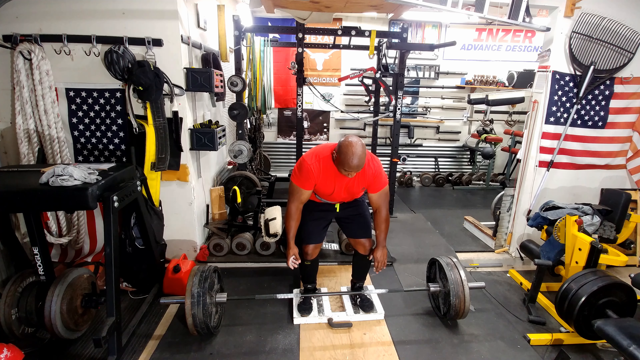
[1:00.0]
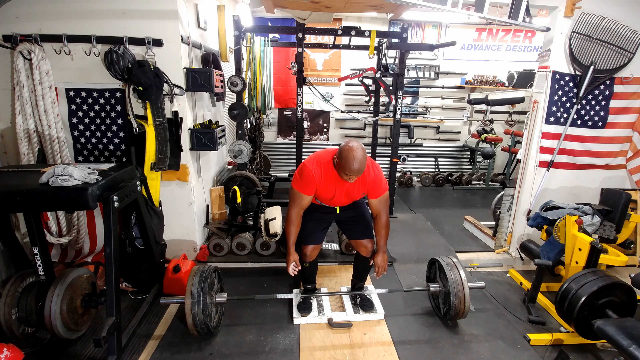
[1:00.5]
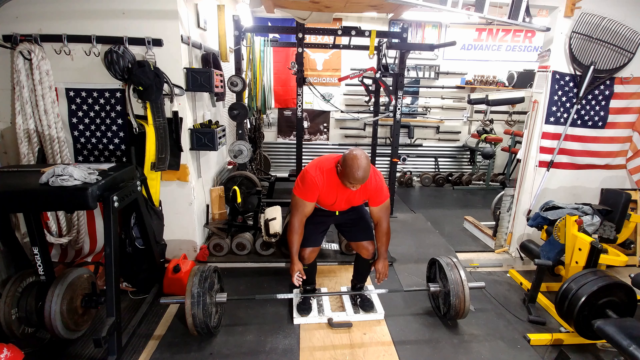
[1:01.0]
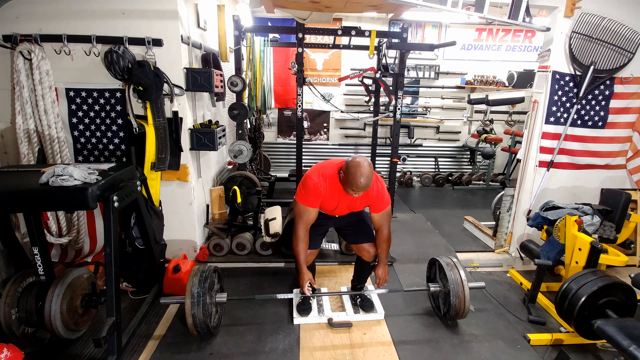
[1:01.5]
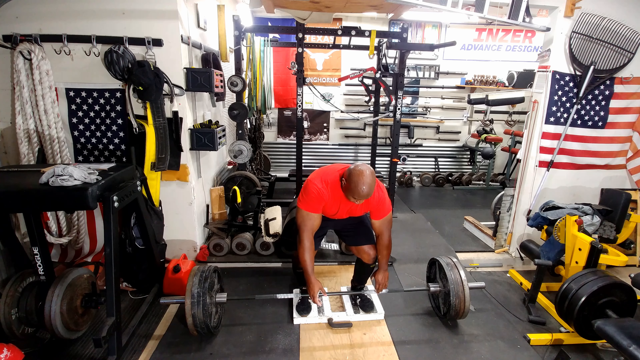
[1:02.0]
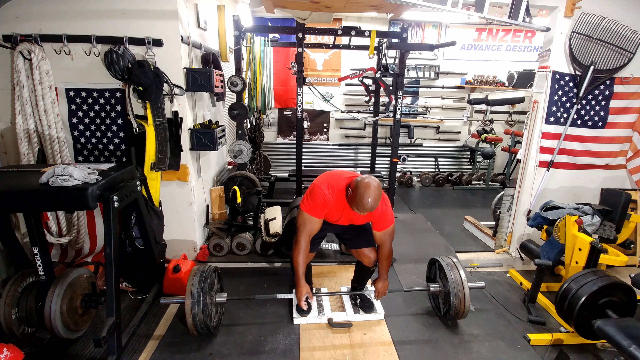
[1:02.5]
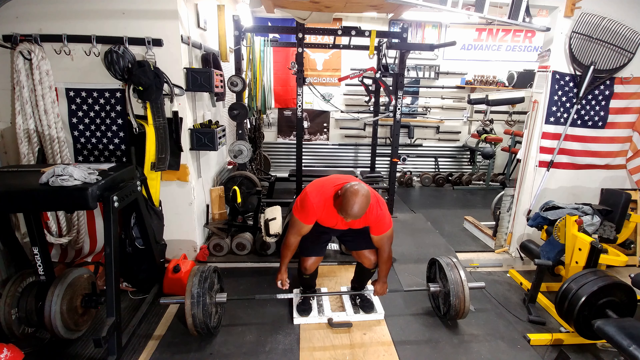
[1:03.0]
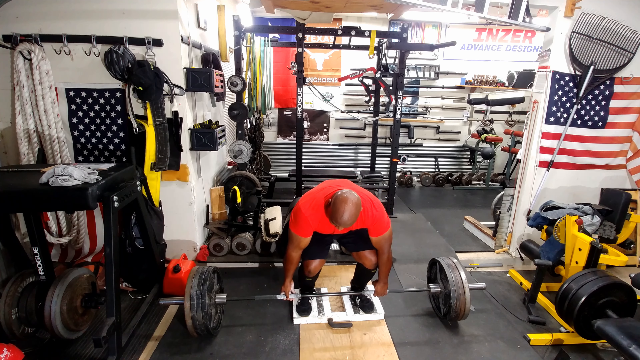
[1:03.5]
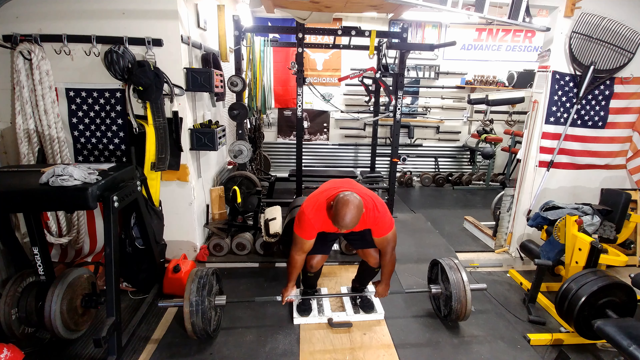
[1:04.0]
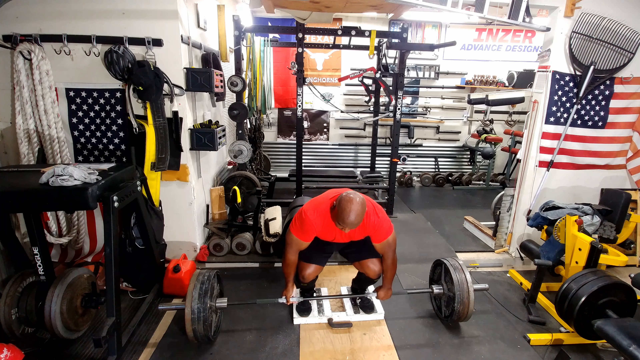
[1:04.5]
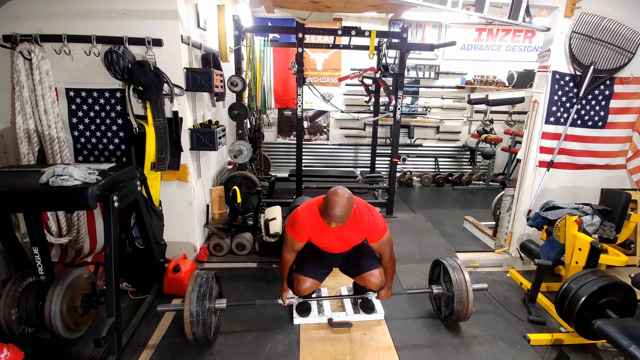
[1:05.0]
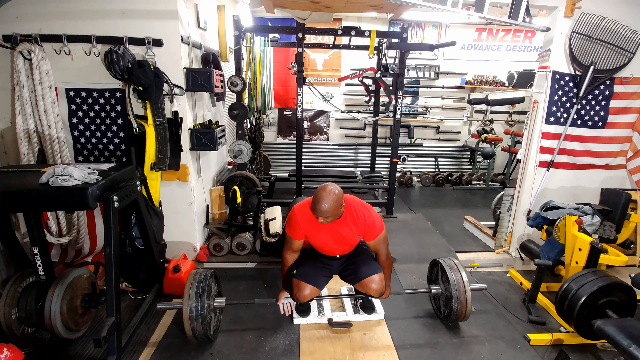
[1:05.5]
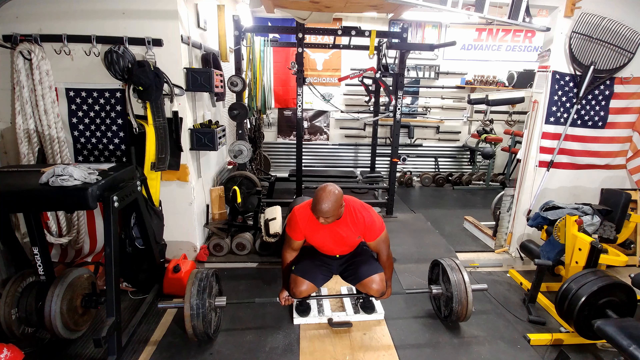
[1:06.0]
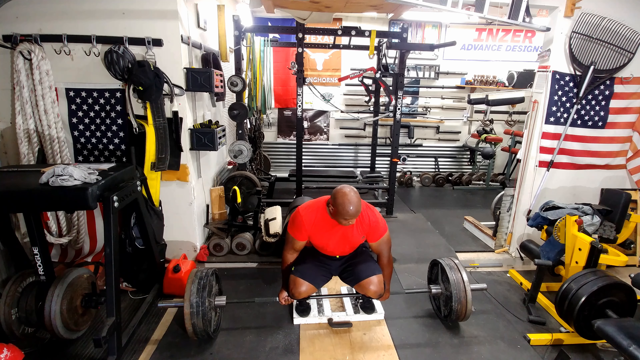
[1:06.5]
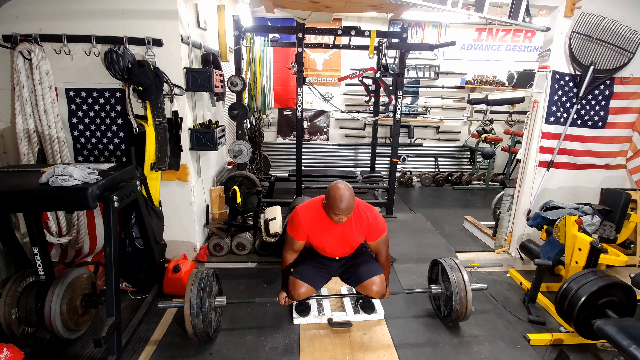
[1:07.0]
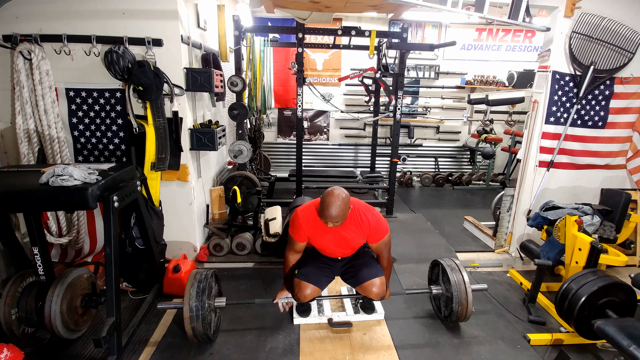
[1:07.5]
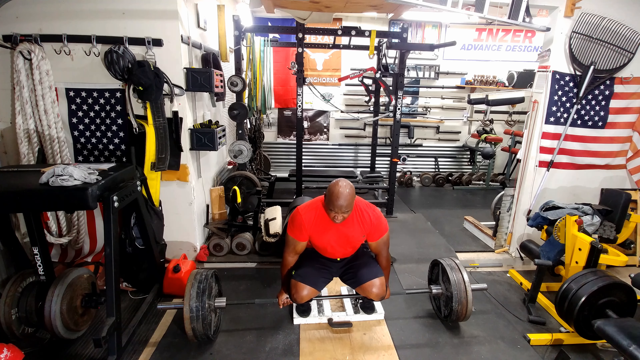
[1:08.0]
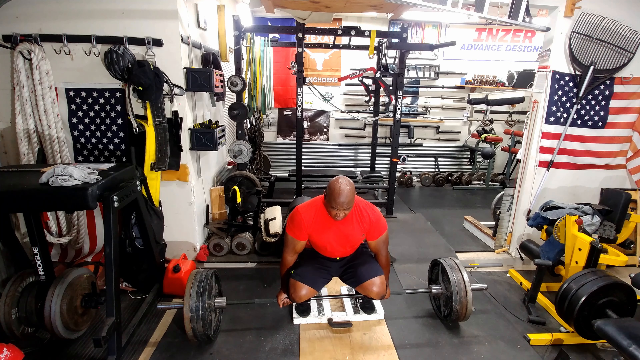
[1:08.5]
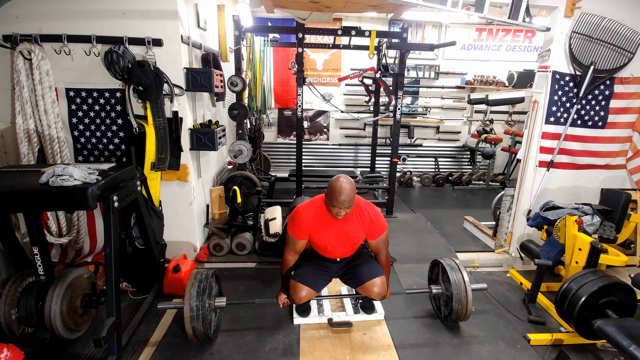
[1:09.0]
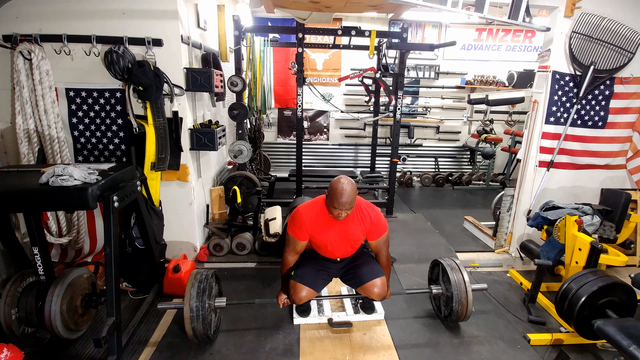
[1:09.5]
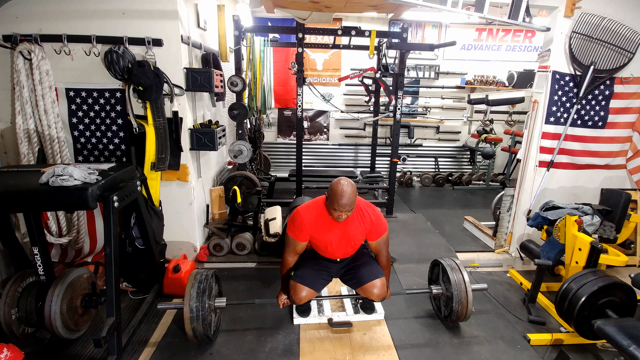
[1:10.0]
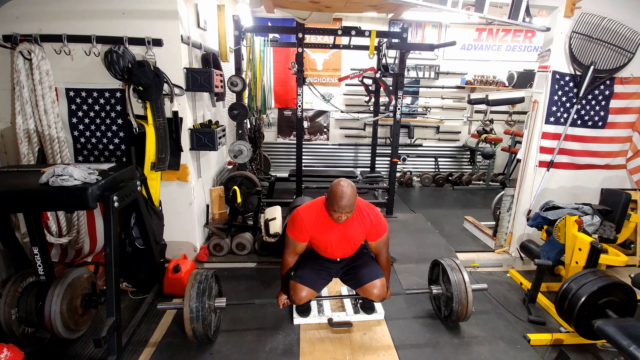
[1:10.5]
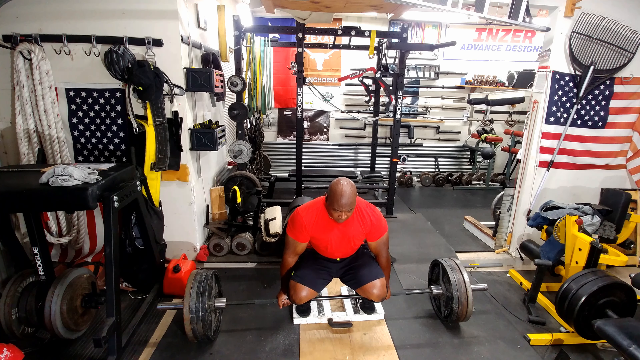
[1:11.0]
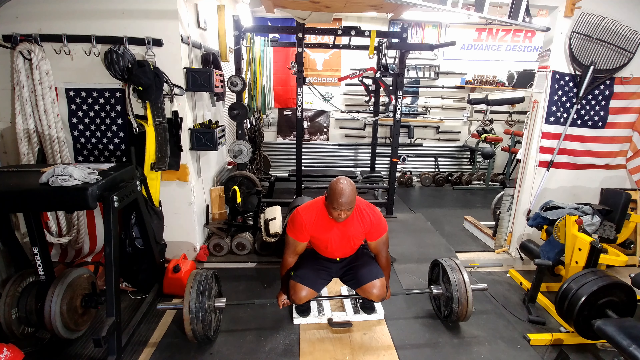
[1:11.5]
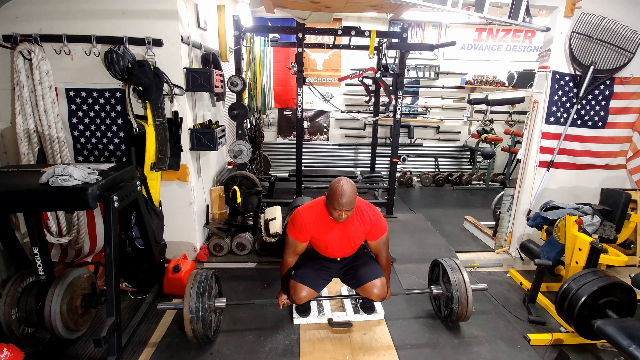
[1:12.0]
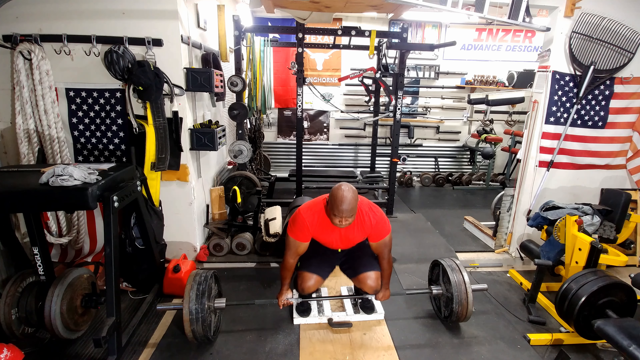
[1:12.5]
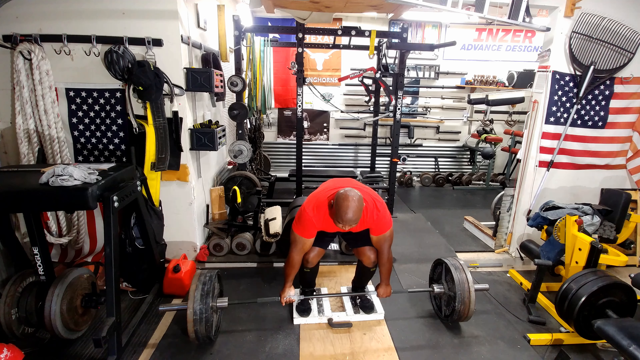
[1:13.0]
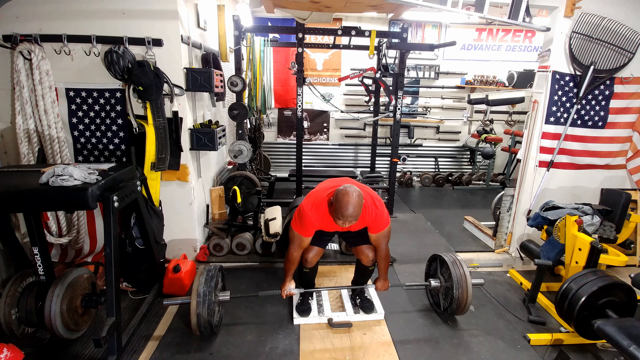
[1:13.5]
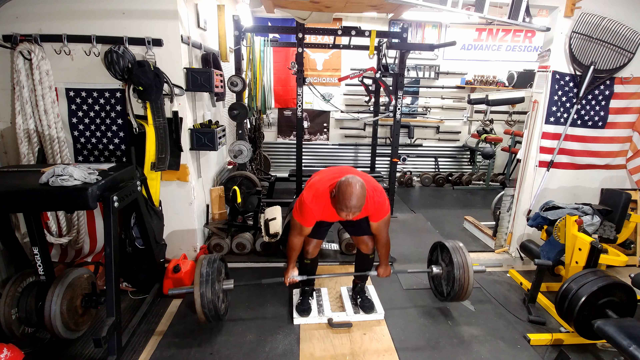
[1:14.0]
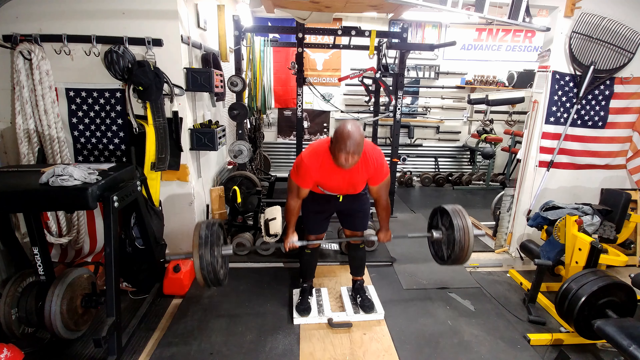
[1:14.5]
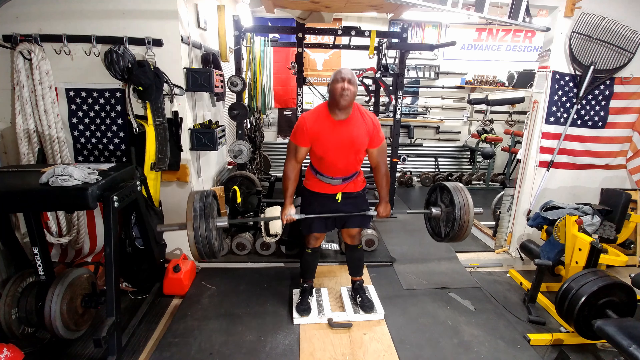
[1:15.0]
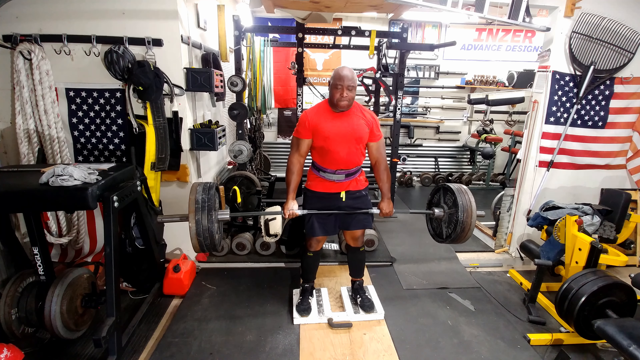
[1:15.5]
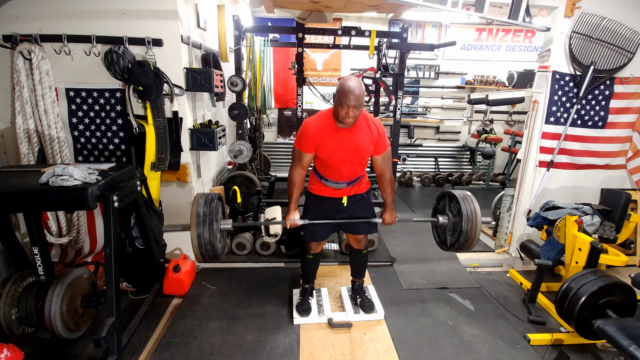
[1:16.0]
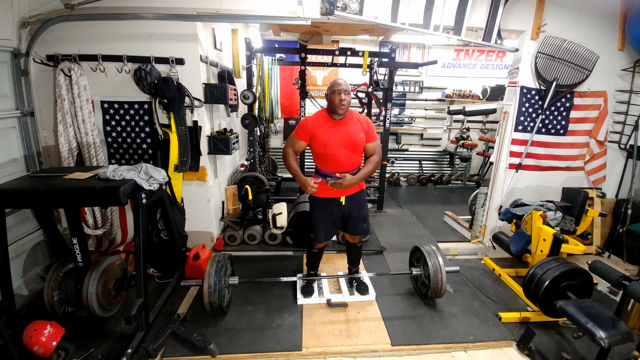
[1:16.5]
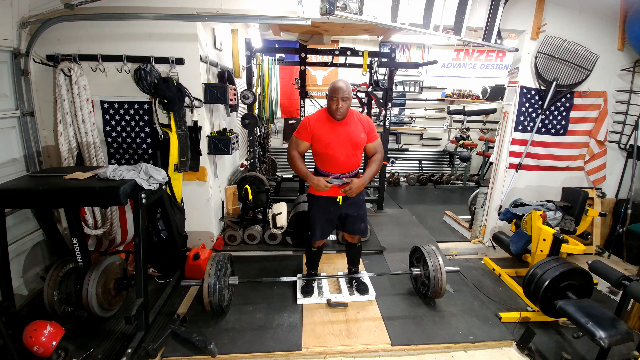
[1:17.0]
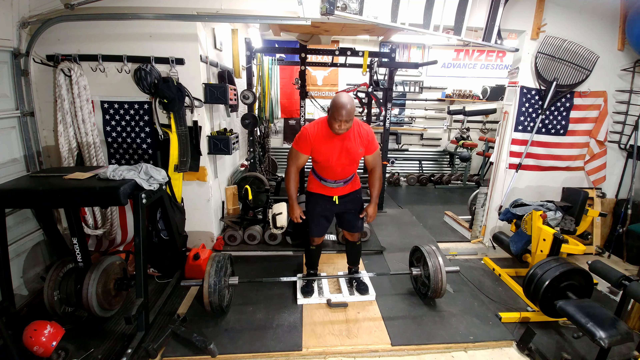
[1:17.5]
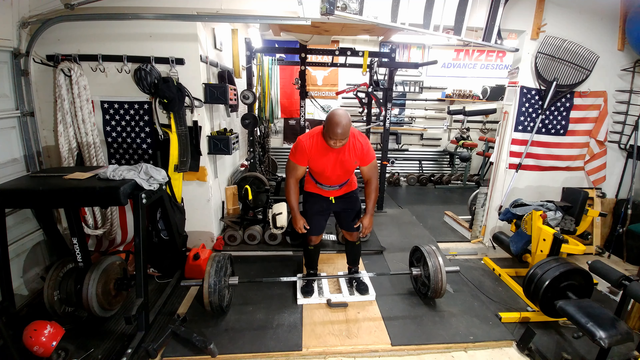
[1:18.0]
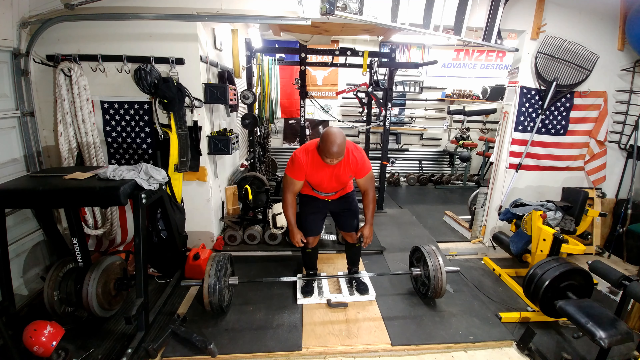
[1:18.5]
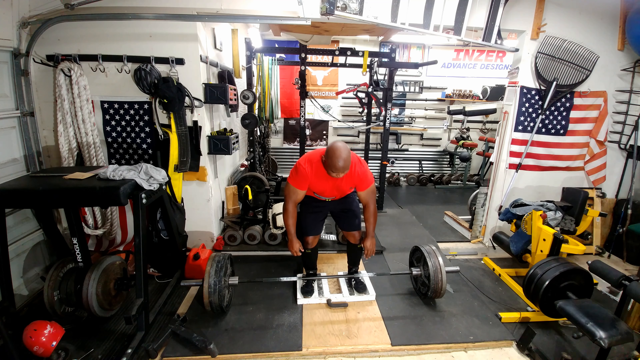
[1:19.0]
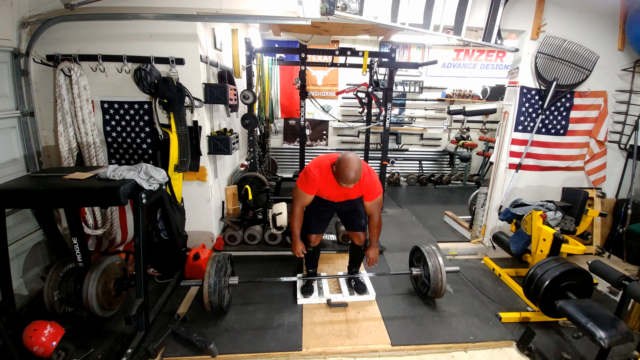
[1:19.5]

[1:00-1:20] The man slowly bends down to pick up the weight bar the same way, with his right palm facing outward so that it is visible and his left facing inward toward him so that the palm is not visible. He has powder on each palm. He squats as he tries to pick it up and struggles, staying in the squat for a few seconds until he finally lifts it. This time he manages only one lift, then drops it, and the camera cuts to show him doing it again before the shot ends. The room is like a personal weight room and is very cluttered, with a lot of weights, some ropes, and a lot of workout equipment such as weight belts sitting around. Two American flags are on the walls.